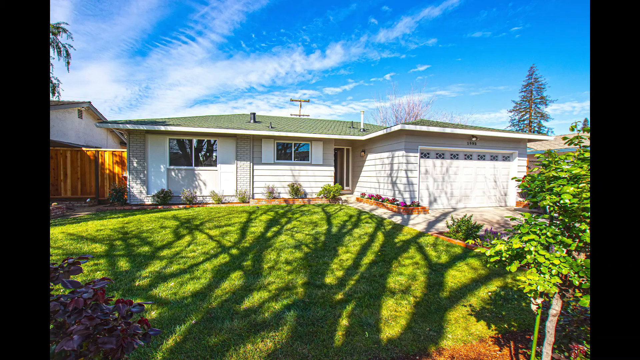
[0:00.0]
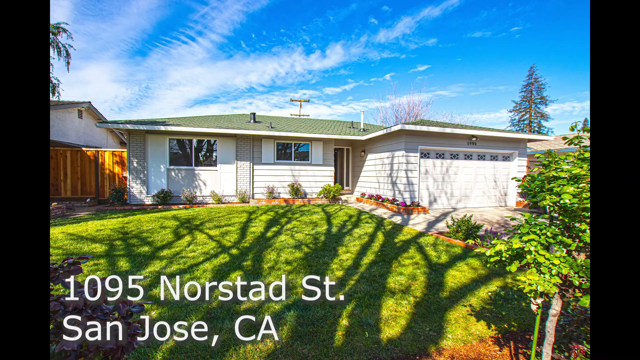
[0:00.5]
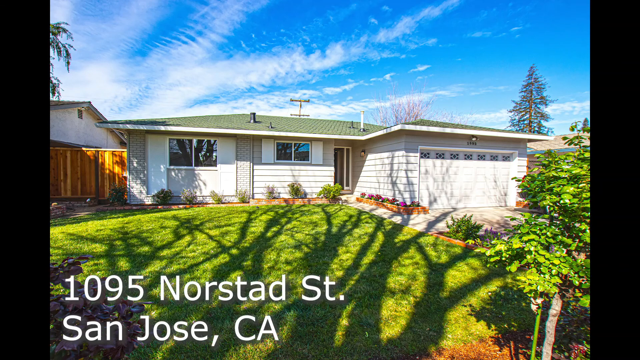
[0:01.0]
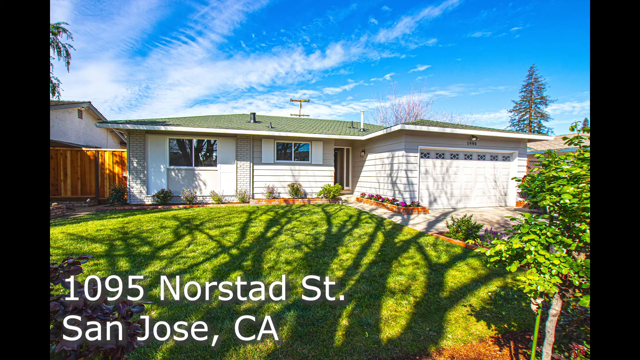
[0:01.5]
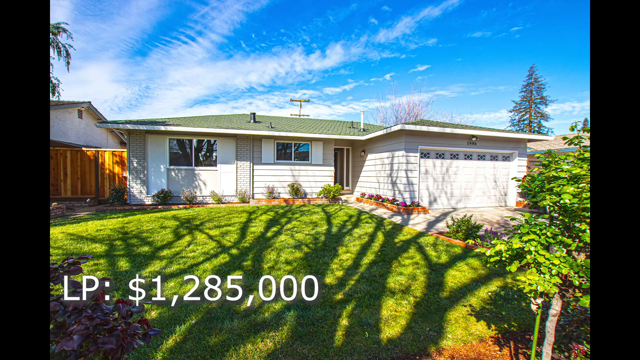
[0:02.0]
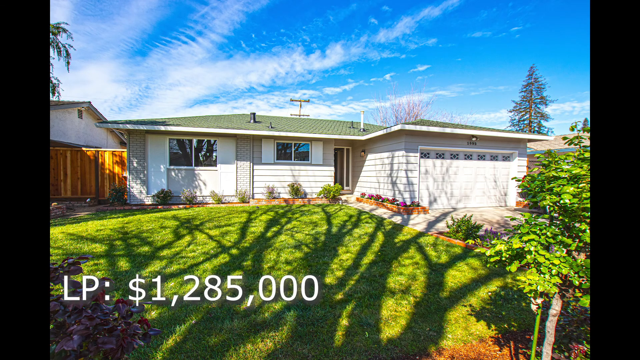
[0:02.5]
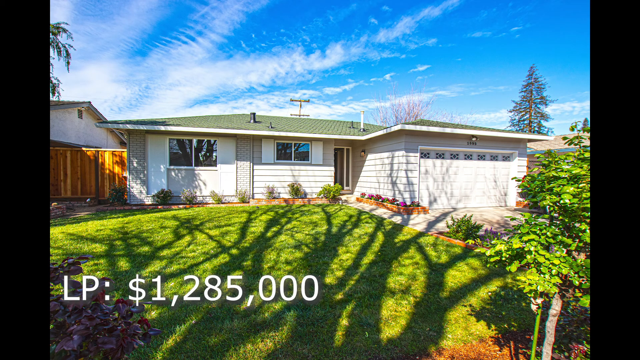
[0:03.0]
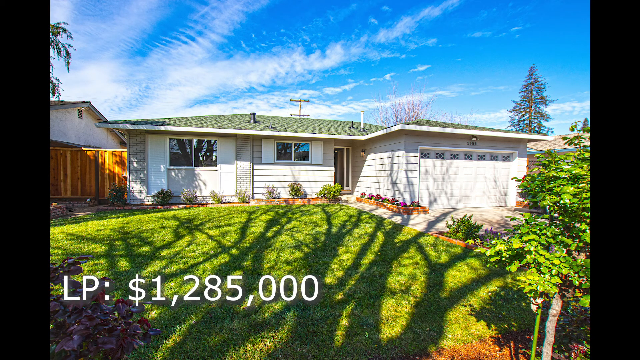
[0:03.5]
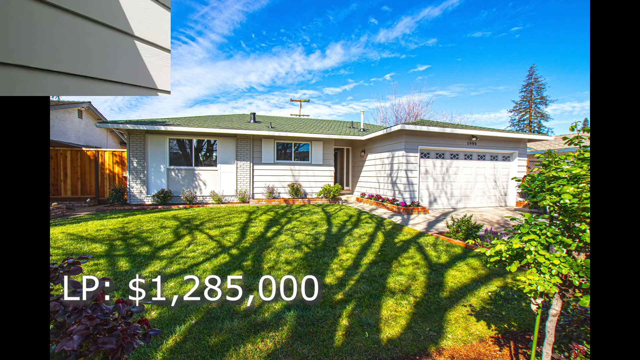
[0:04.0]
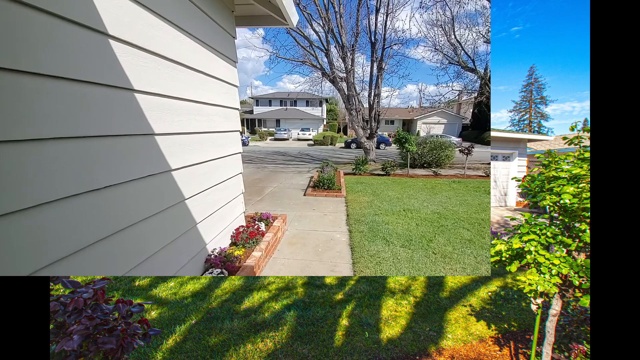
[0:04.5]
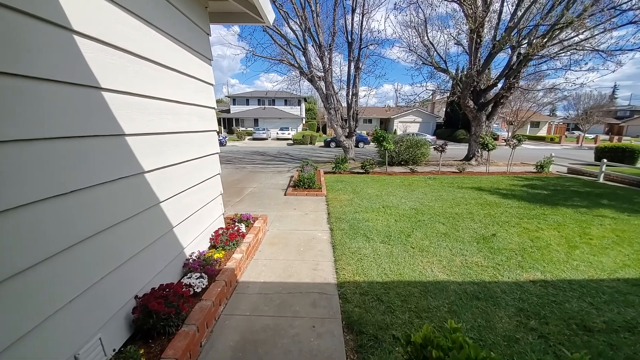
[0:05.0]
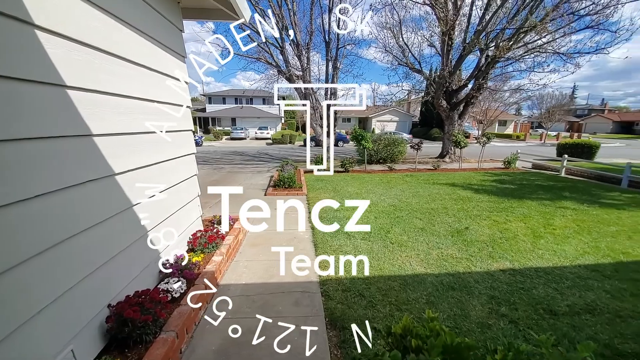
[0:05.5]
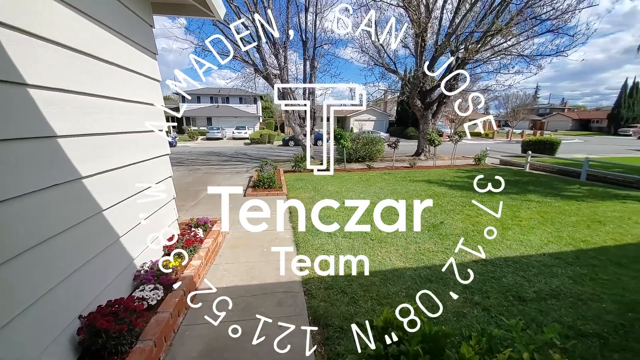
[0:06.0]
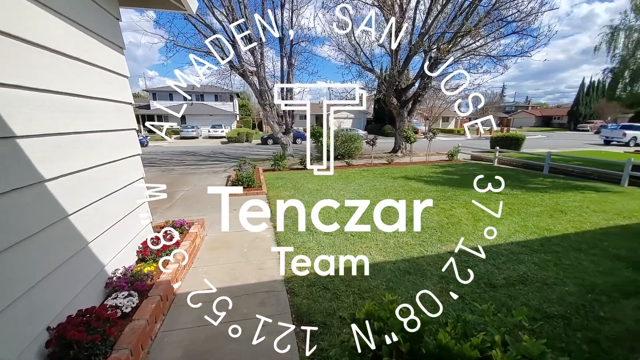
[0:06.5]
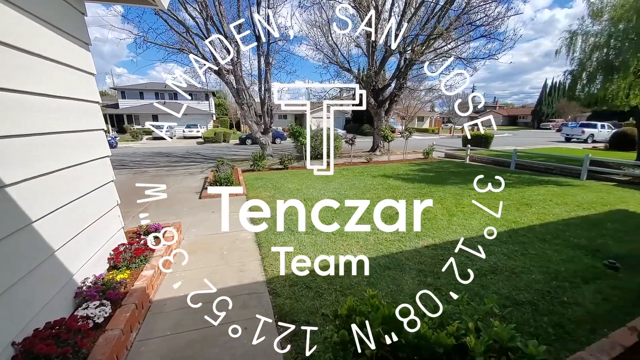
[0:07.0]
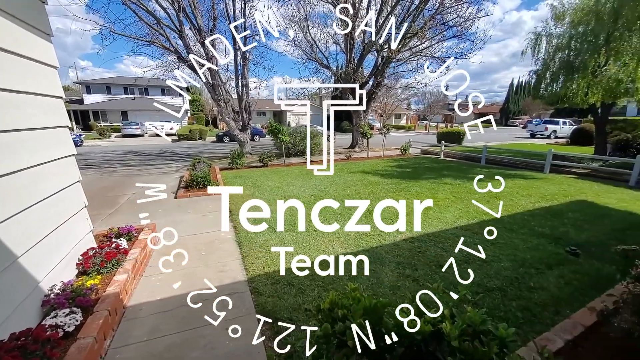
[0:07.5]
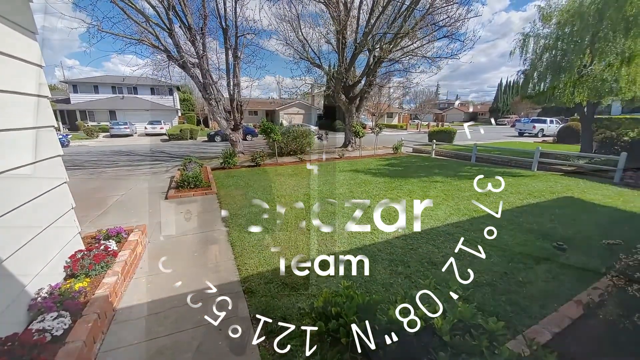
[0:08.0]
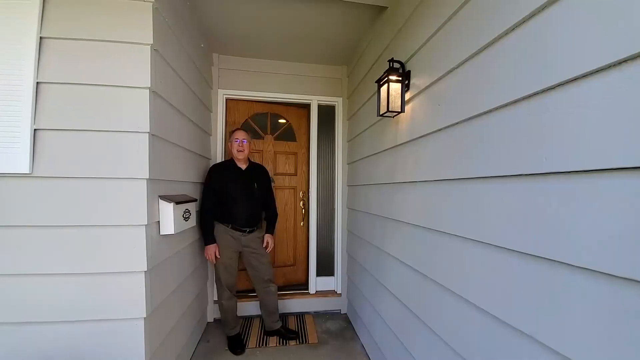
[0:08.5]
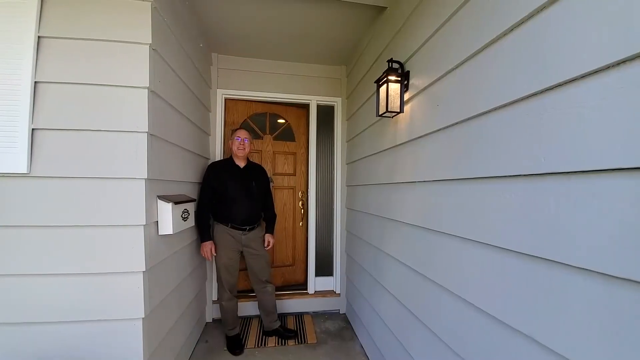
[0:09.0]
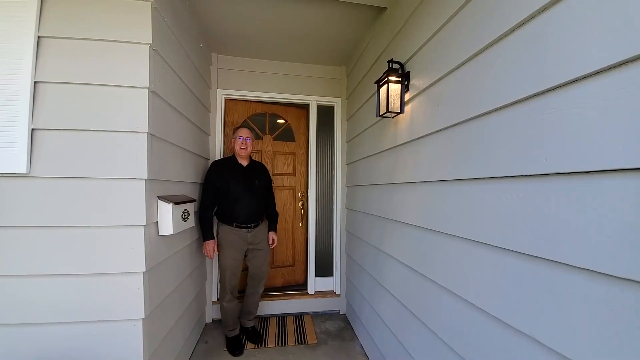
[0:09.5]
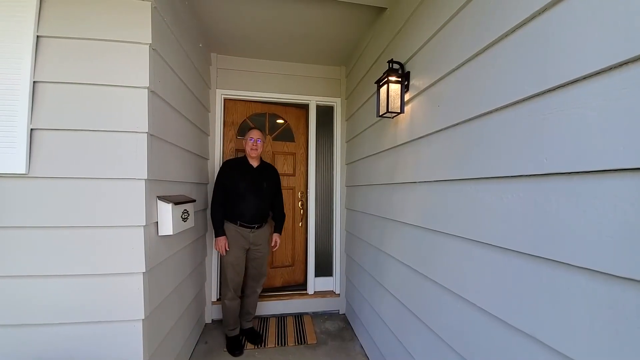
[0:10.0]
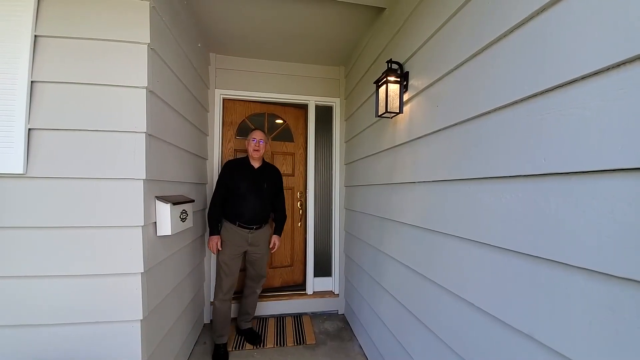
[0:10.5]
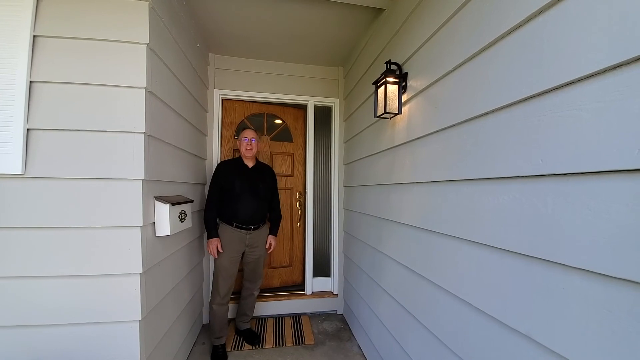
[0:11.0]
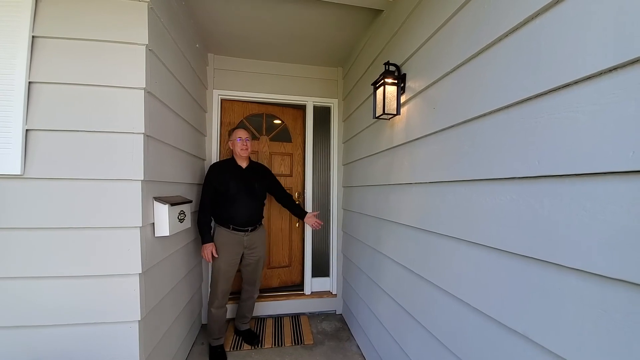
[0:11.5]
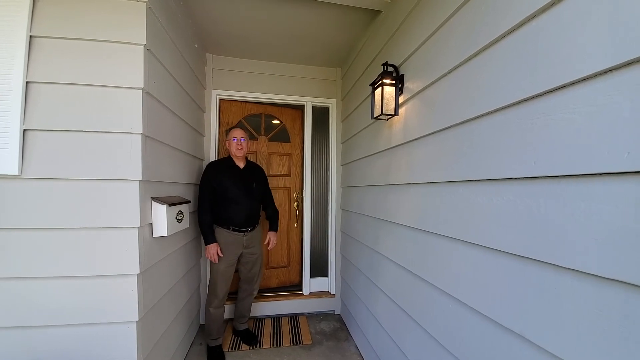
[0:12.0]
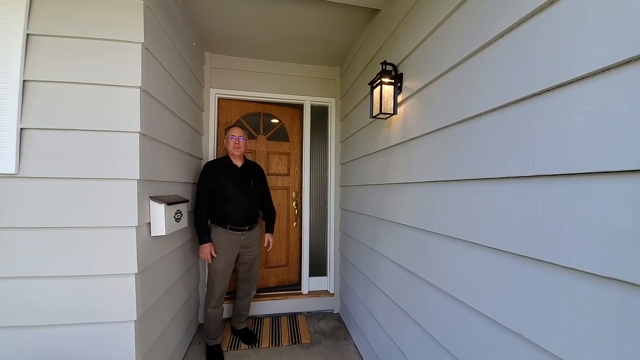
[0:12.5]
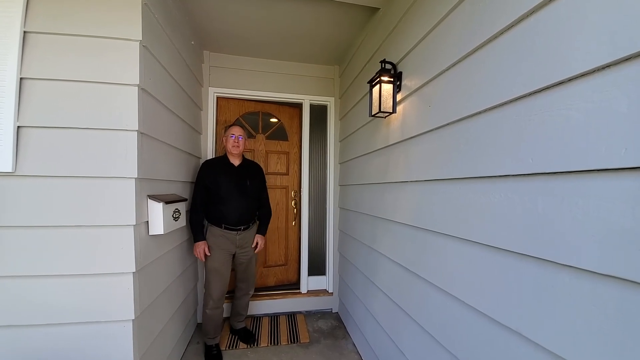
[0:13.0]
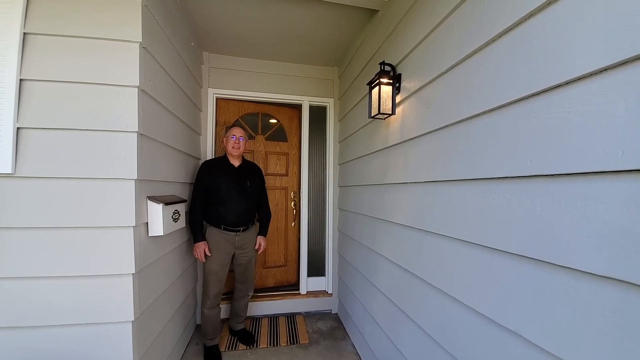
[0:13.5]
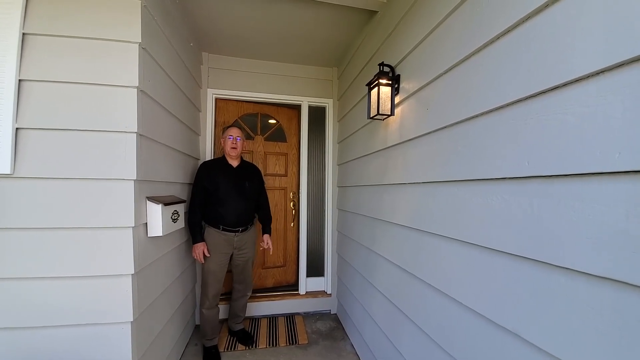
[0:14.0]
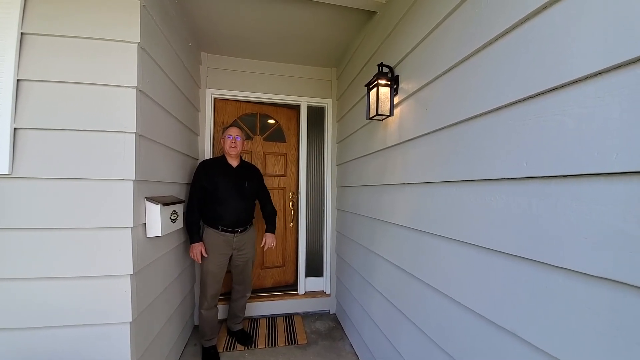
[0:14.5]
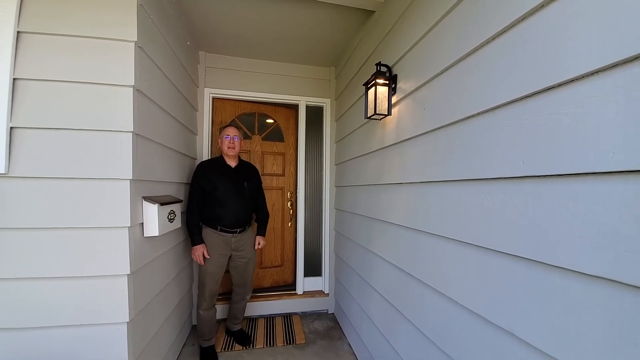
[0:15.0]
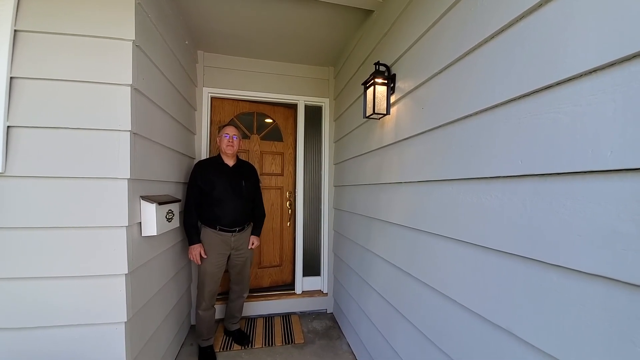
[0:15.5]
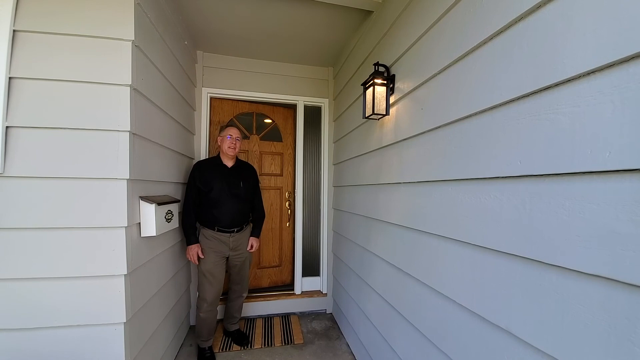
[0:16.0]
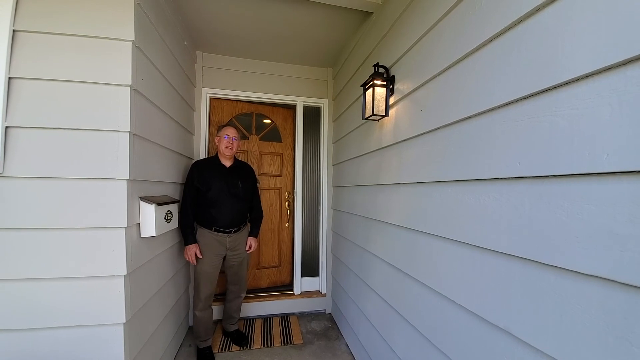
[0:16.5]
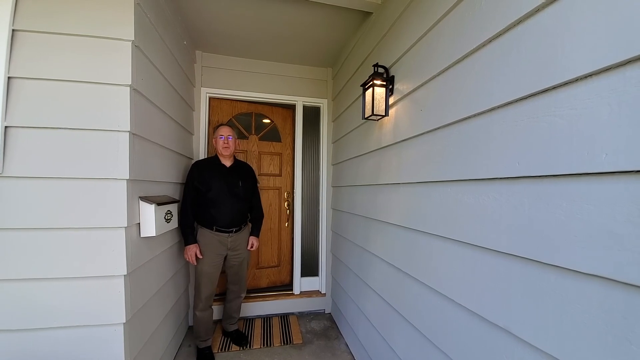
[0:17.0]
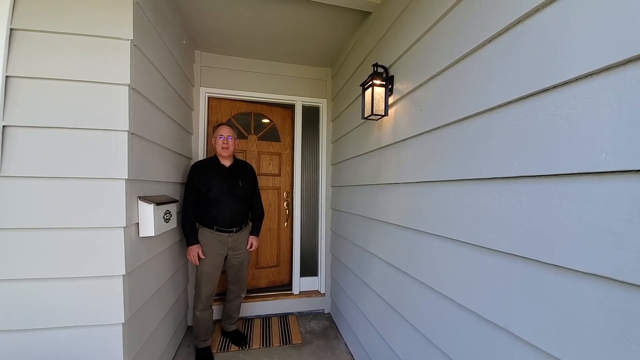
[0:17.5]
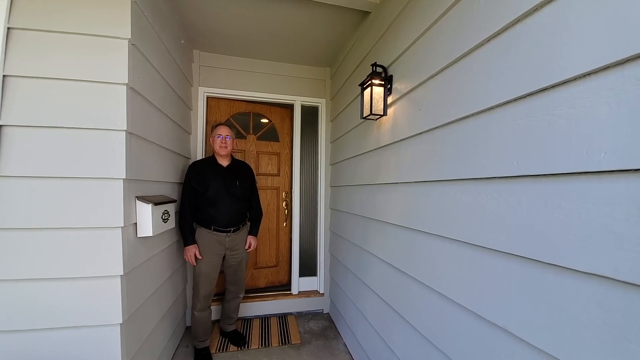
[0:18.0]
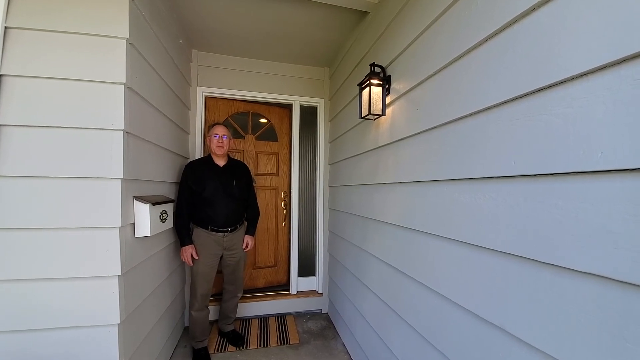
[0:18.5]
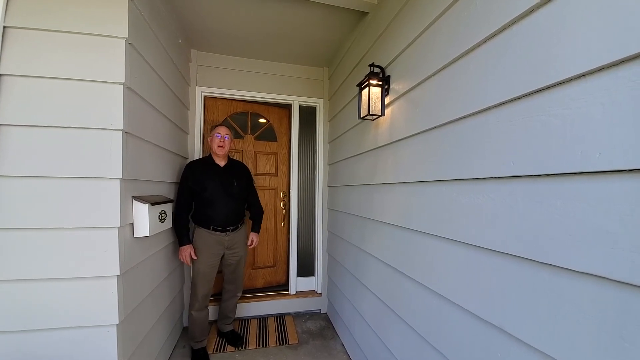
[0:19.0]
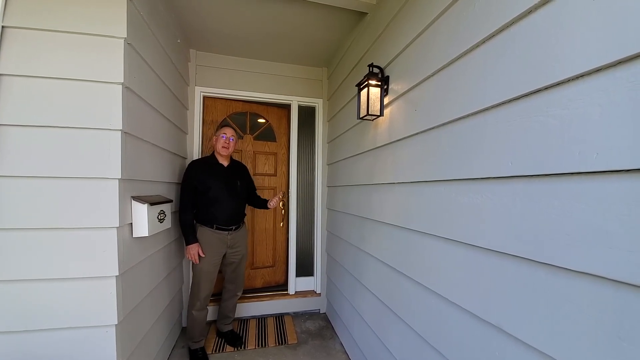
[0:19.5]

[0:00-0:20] A house for sale is located at 1095 Norstad Street in San Jose, California, with a listing price of $1,285,000. It is a very basic-looking, ranch-style home, seemingly about 1,500 to 2,000 square feet, with a brick facade, aluminum siding and a green roof. It looks very well maintained, though it is a small home, probably built in the 60s or early 1970s. The realtor appears: a chubby, balding white man wearing glasses, charcoal gray slacks, a black button-down shirt tucked in, and a black belt.